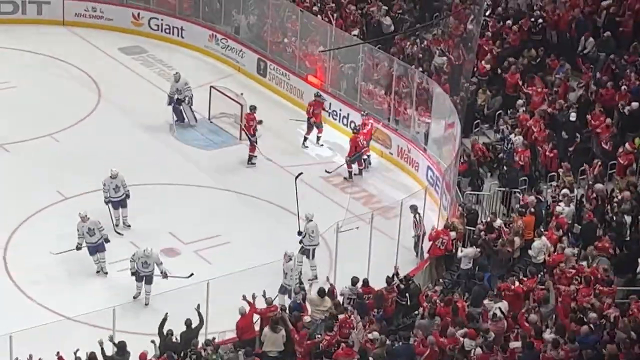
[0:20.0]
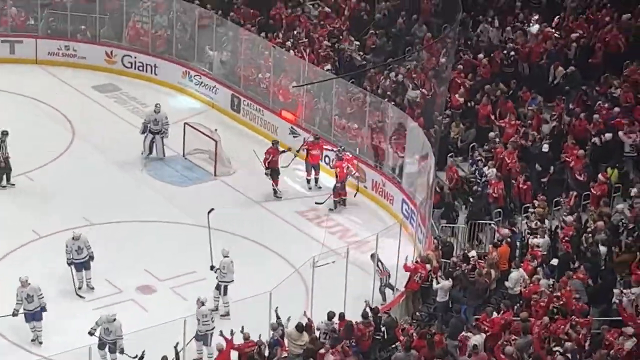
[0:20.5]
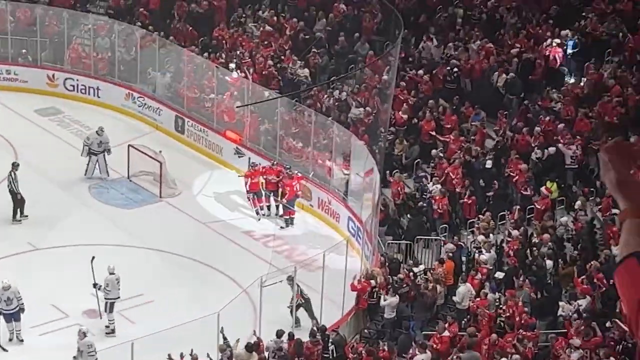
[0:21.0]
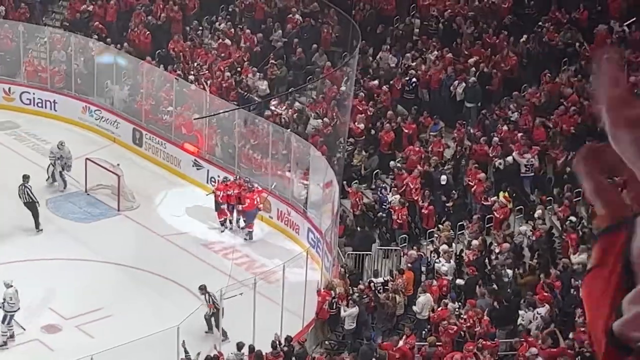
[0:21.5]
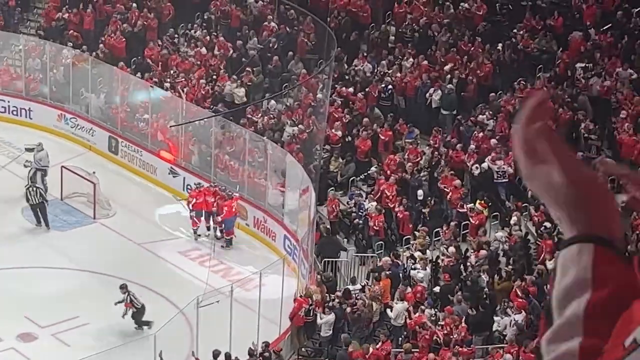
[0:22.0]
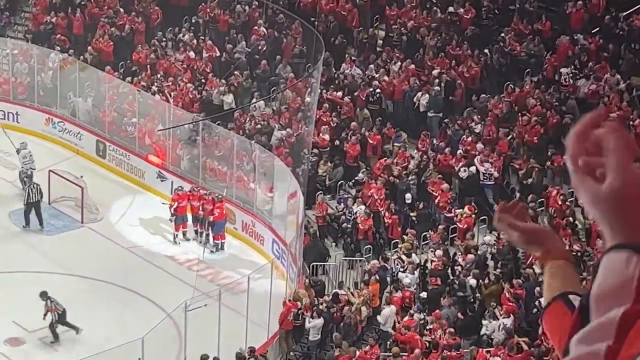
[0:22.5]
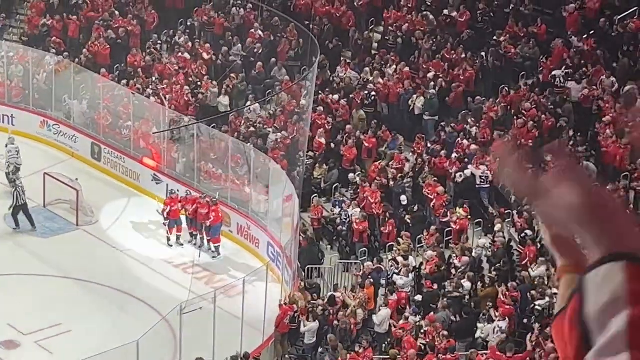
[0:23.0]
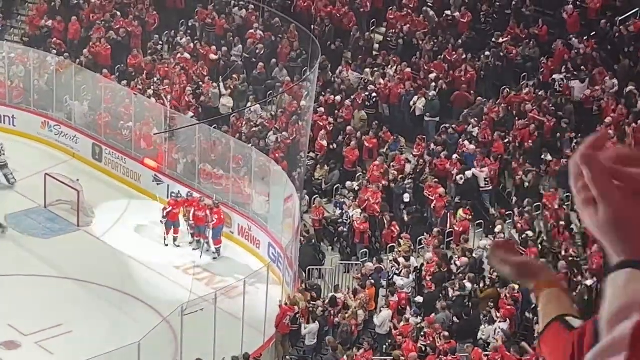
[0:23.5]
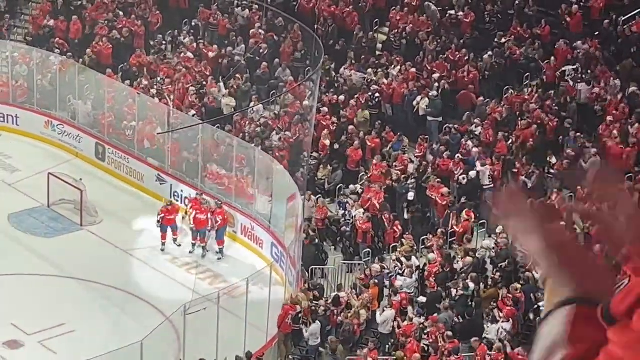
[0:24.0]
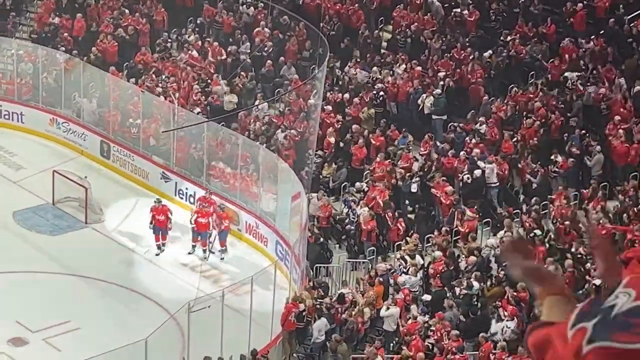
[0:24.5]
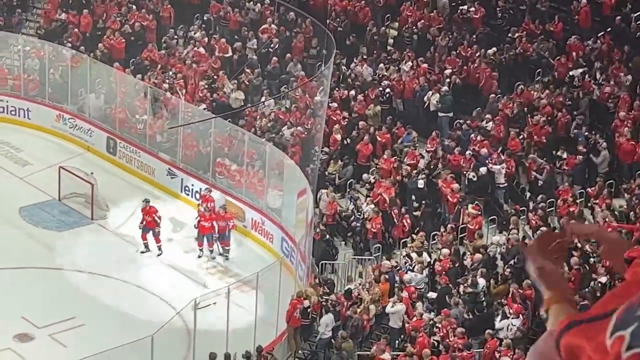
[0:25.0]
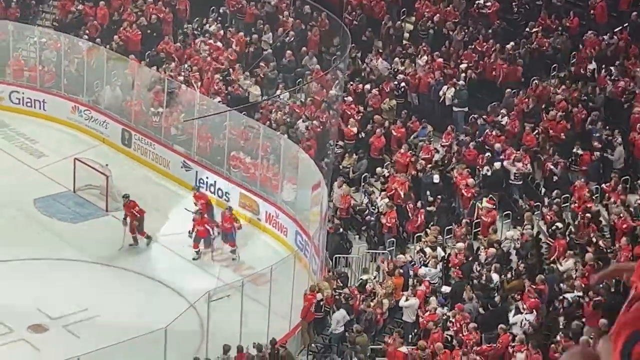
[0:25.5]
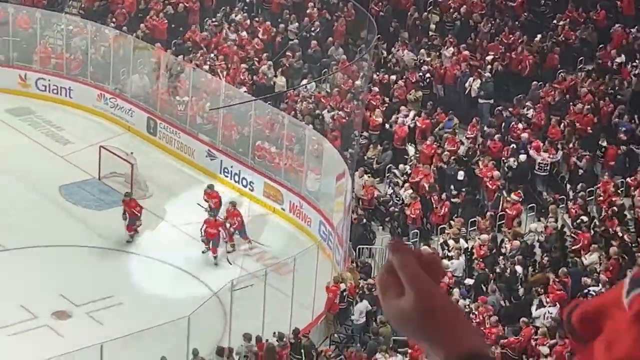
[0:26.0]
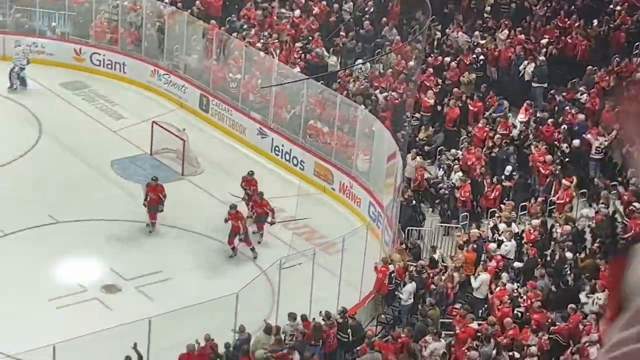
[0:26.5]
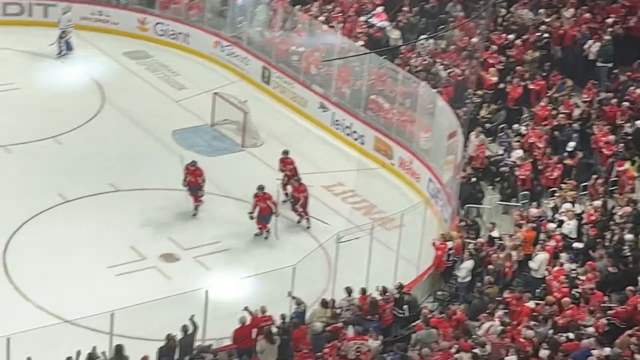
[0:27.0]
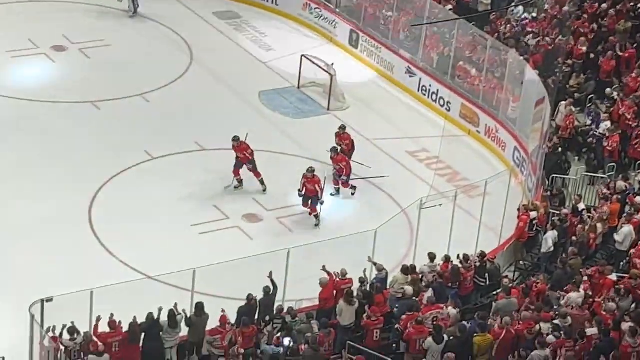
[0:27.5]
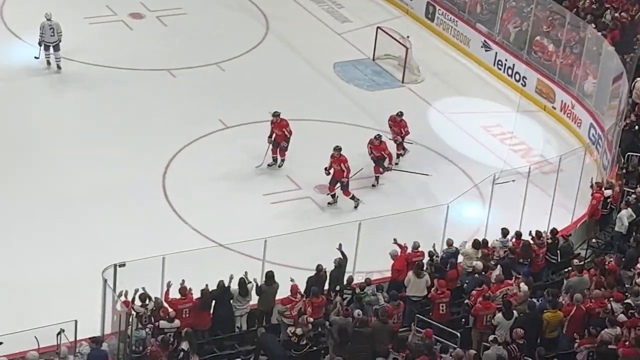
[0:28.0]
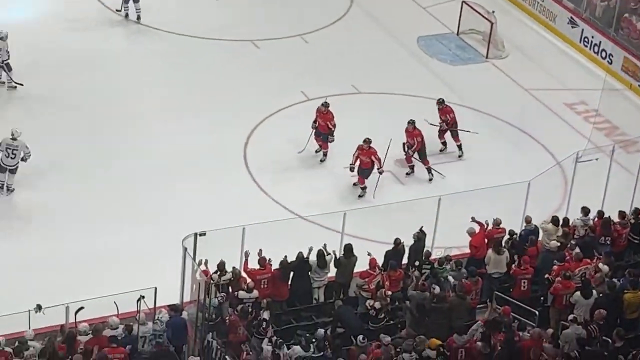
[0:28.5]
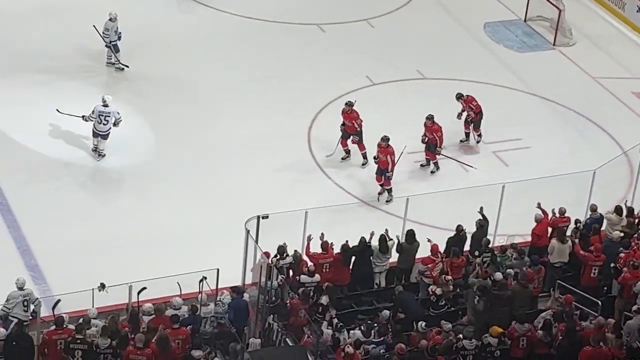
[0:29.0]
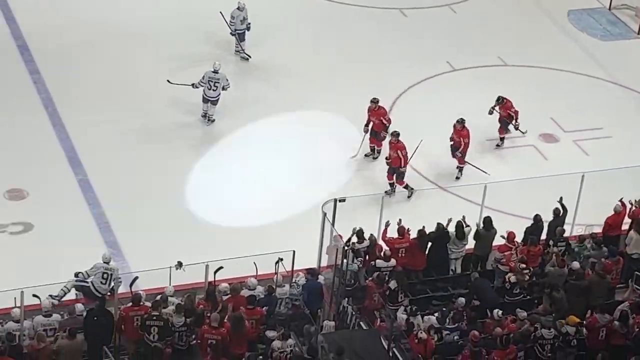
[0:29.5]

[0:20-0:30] After the goal, the red team gathers up as a group and seems to head back toward the spot where they started. The crowd cheers and the players slide into each other. Most of the crowd is dressed in red rather than white, suggesting the red team is probably the home team.